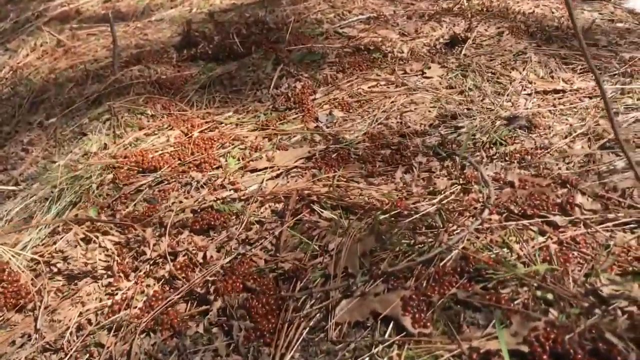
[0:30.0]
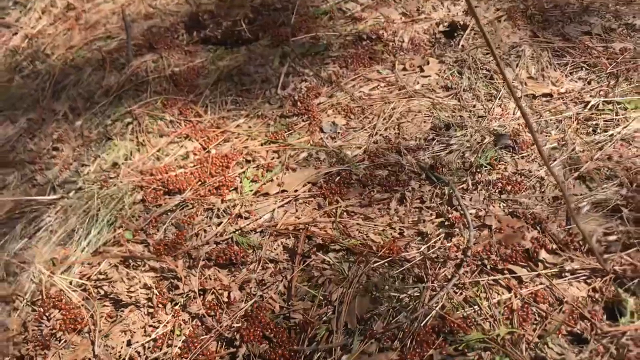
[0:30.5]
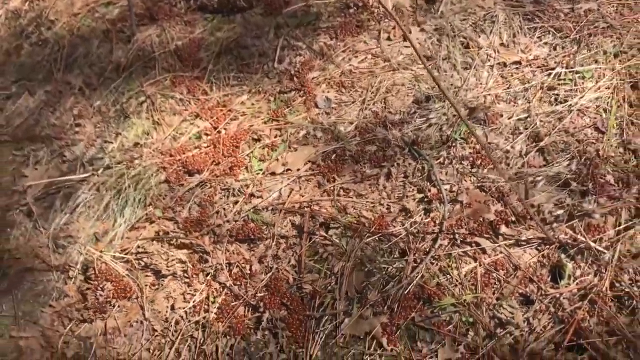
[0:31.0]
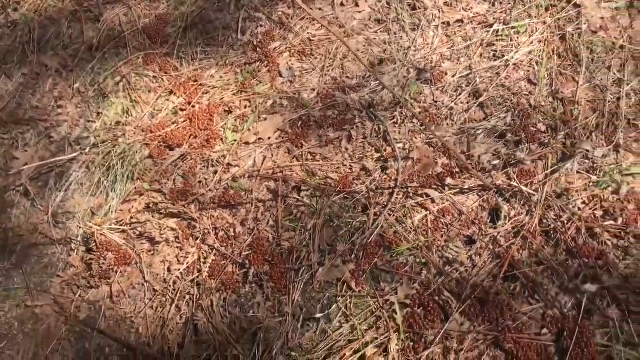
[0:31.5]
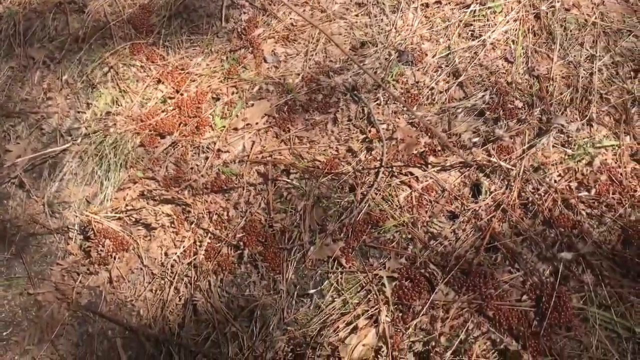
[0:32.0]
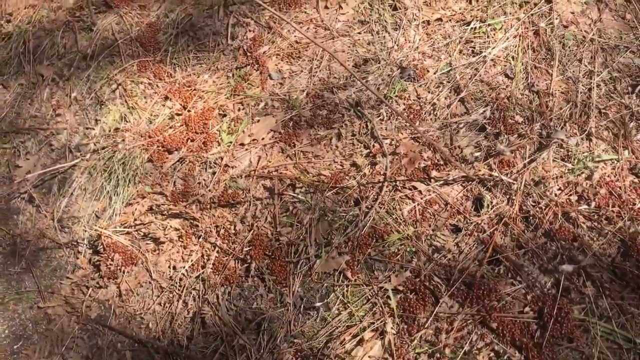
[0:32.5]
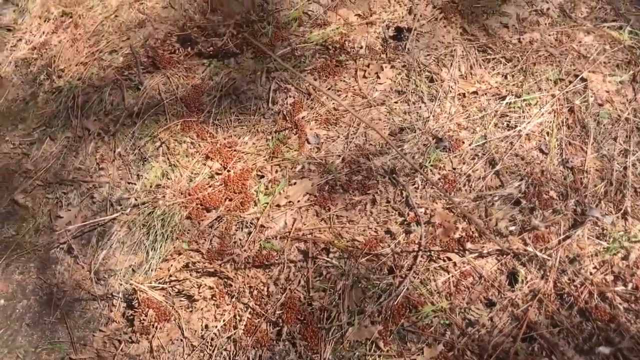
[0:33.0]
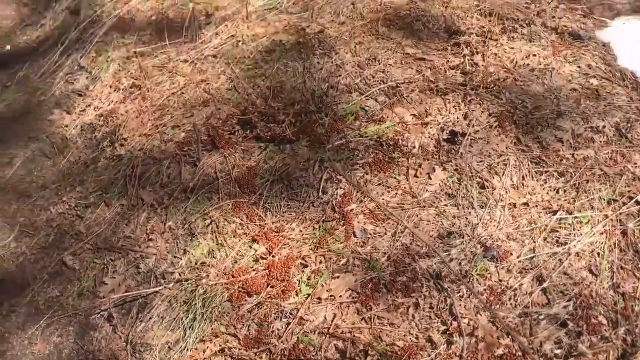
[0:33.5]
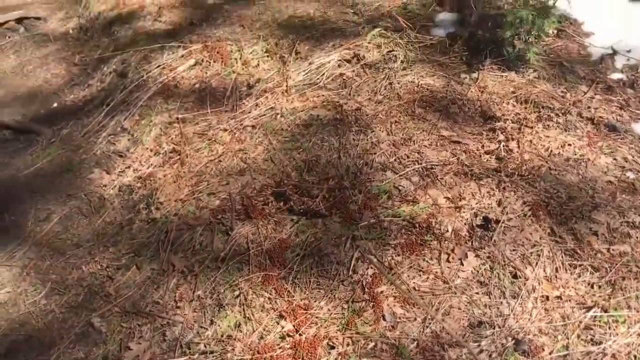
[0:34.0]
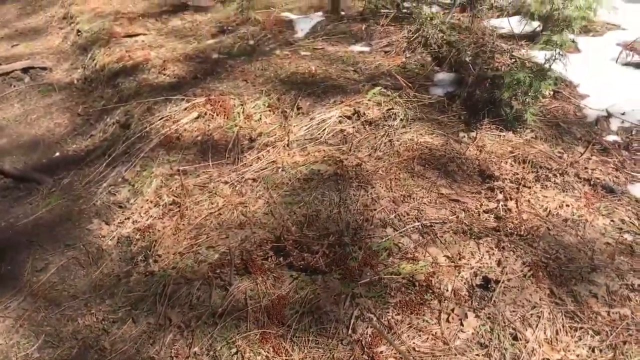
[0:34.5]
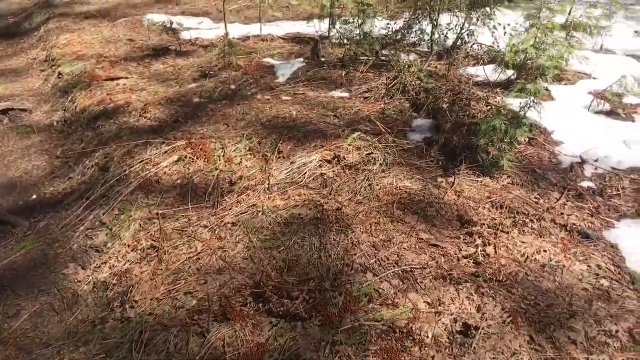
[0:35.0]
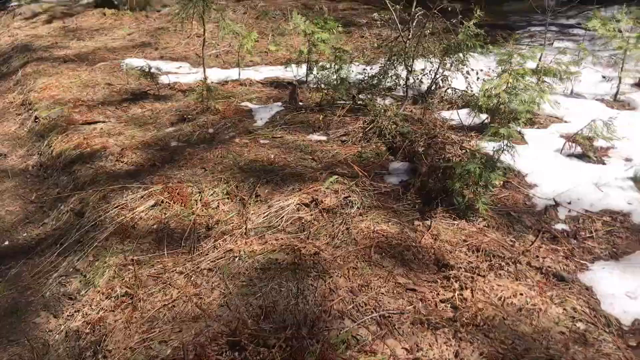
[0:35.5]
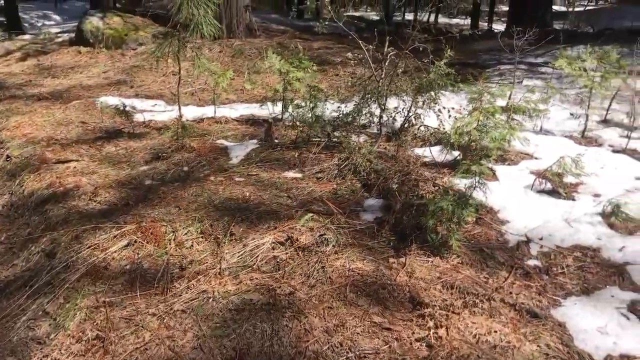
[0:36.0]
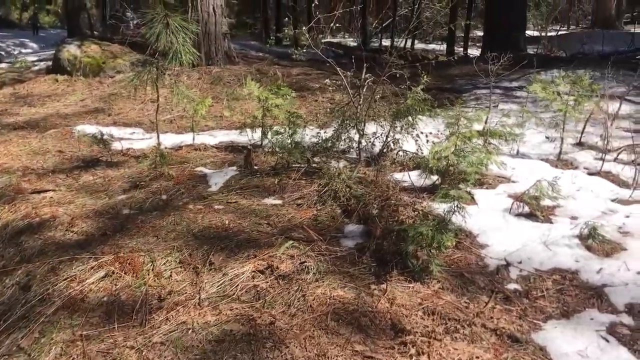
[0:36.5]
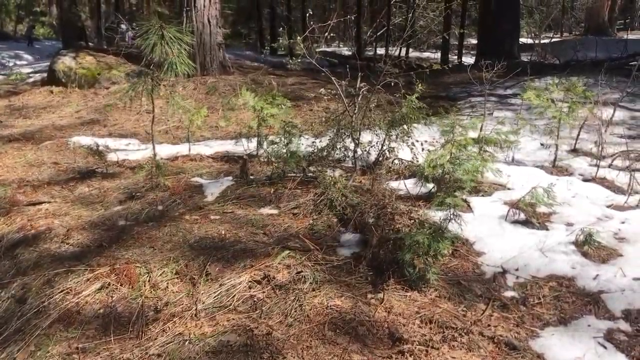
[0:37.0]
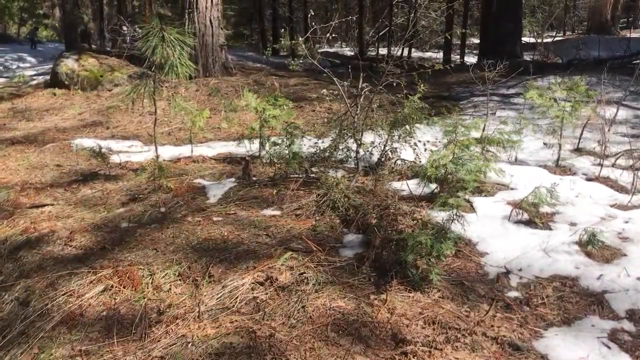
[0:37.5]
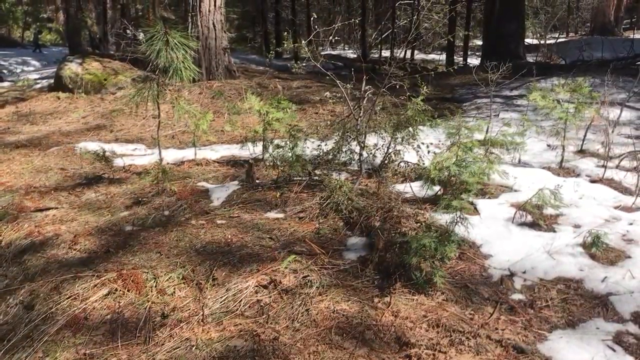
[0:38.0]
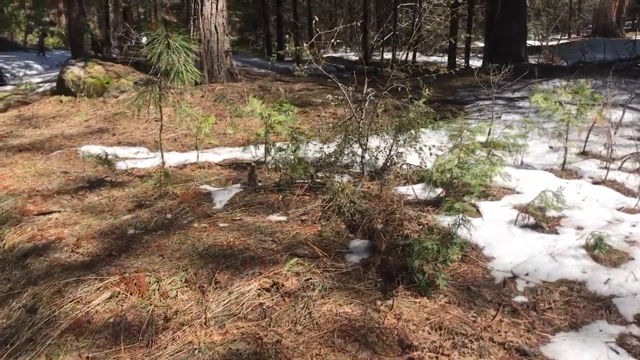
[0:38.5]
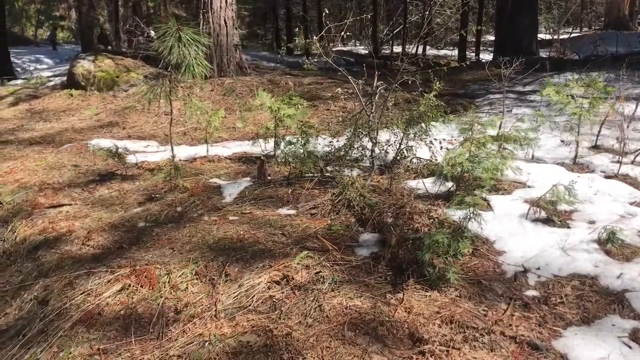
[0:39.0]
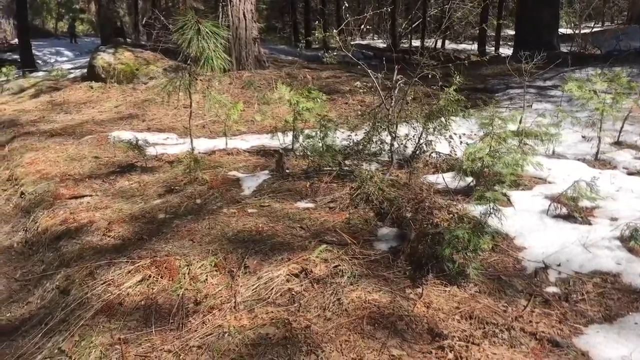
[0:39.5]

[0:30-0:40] Thousands upon thousands of bugs crawl on top of each other in the field as the camera zooms out, making them look more like droppings fallen from plants, since their movement can no longer be seen from the greater distance. The camera pans upwards towards a number of plants in the mid-ground. The area turns out to be a forest, with a bunch of new saplings growing nearby and a wooded area in the background. It appears to be winter, as patches of snow cover the ground. Rather than a dirt, arid environment, it is a snowy, wooded forest.